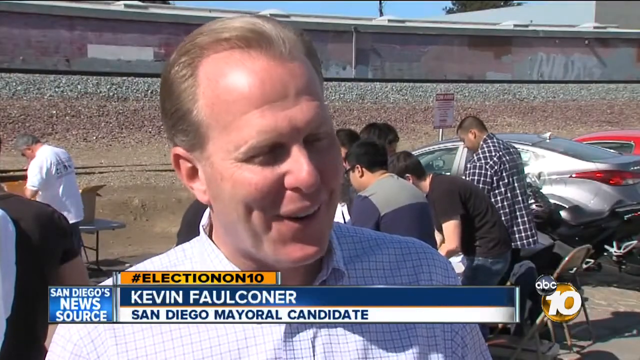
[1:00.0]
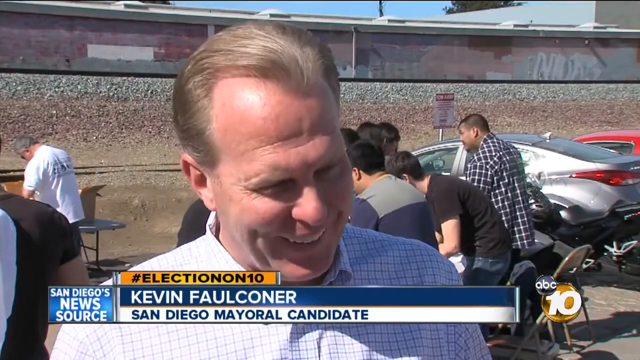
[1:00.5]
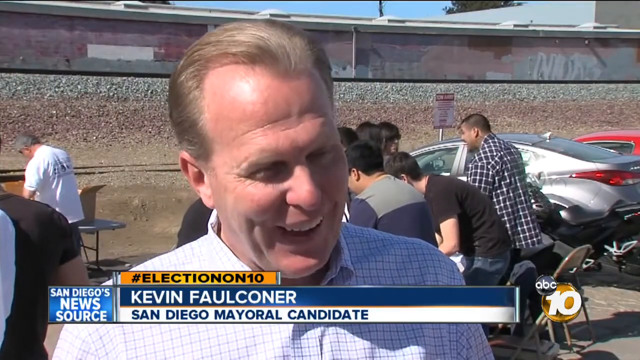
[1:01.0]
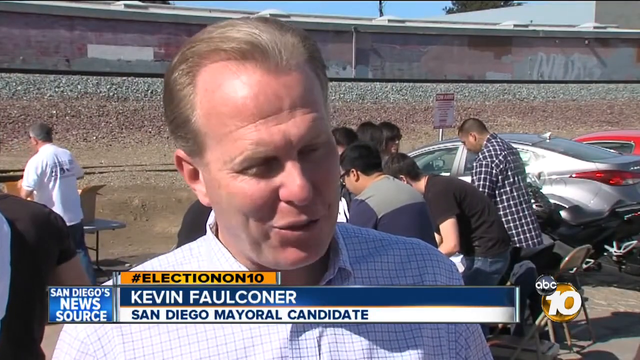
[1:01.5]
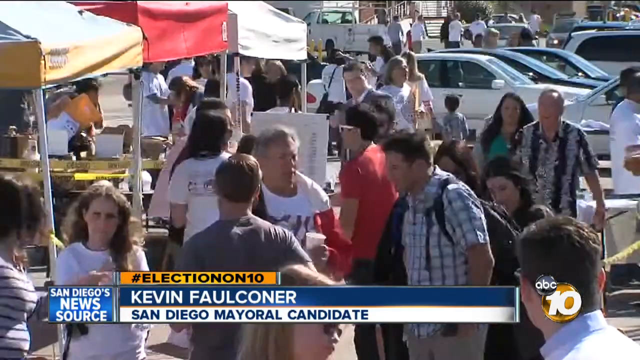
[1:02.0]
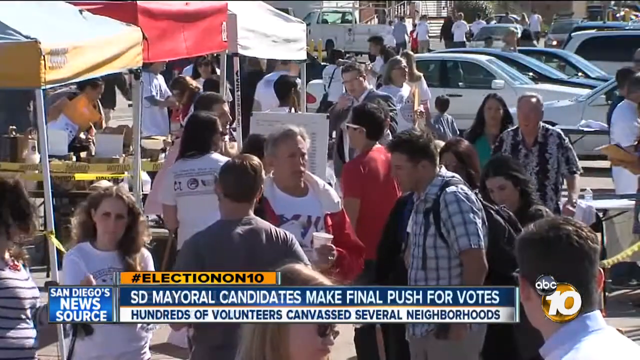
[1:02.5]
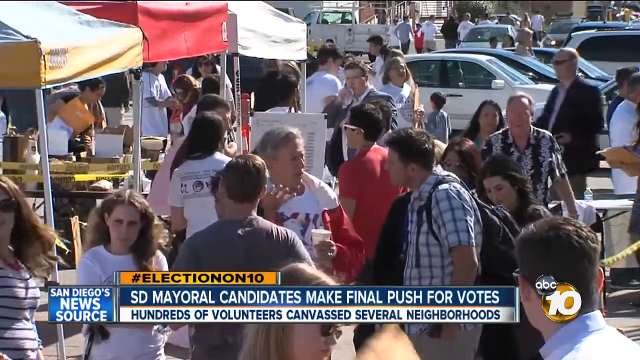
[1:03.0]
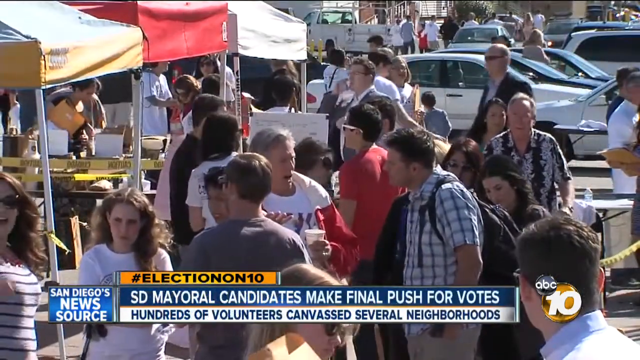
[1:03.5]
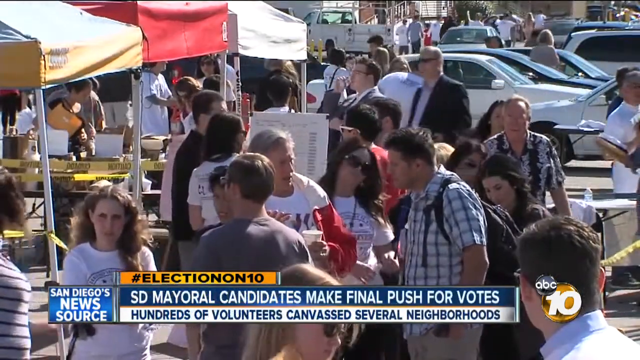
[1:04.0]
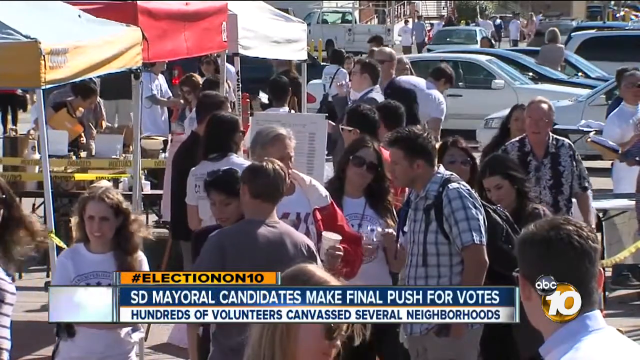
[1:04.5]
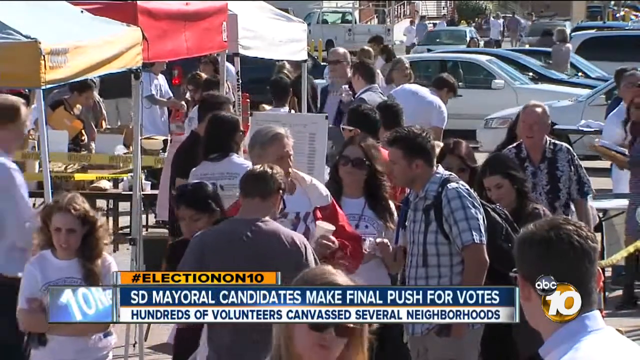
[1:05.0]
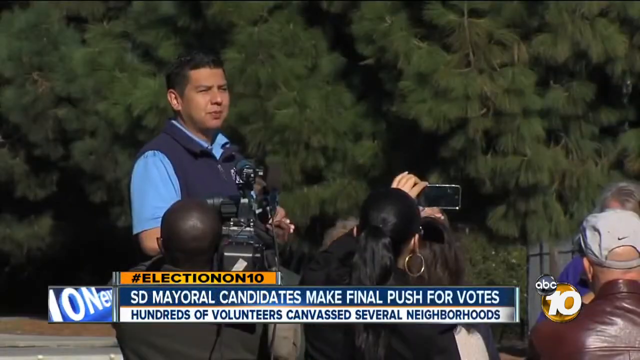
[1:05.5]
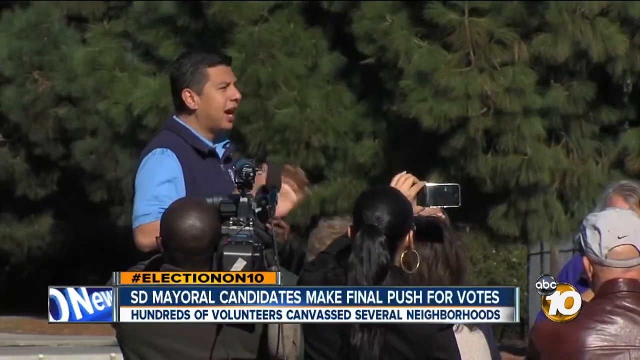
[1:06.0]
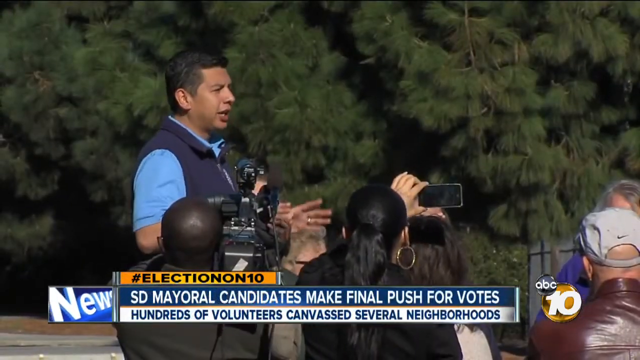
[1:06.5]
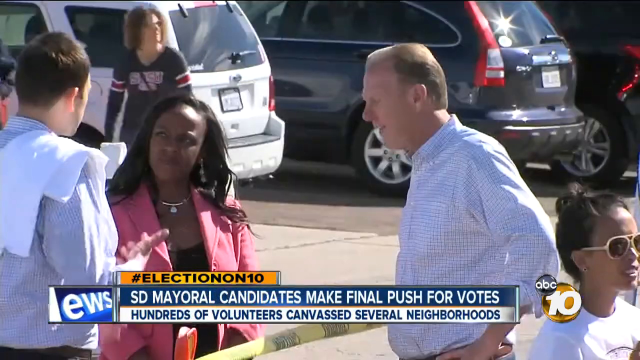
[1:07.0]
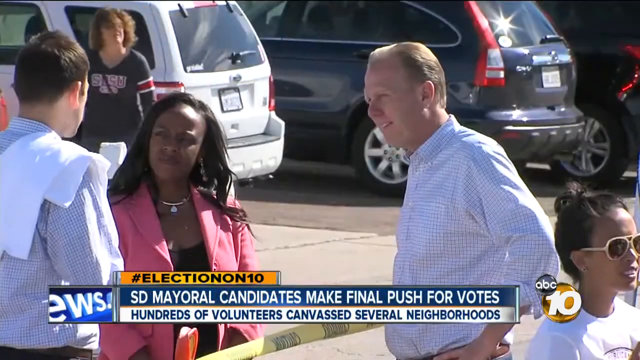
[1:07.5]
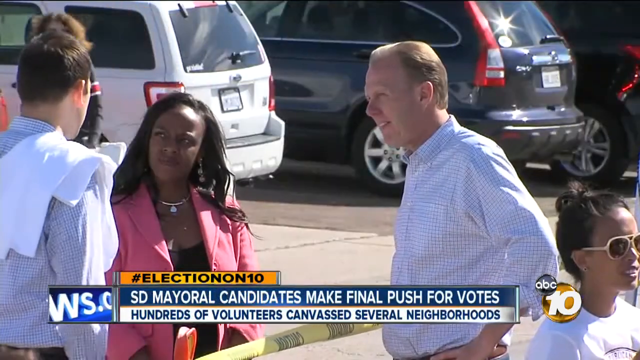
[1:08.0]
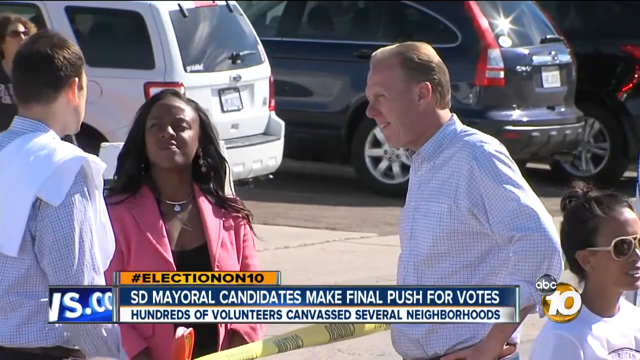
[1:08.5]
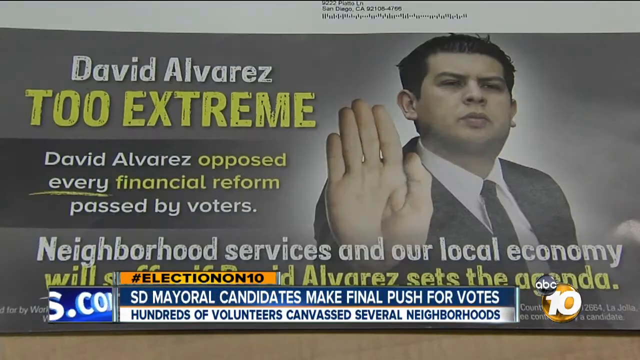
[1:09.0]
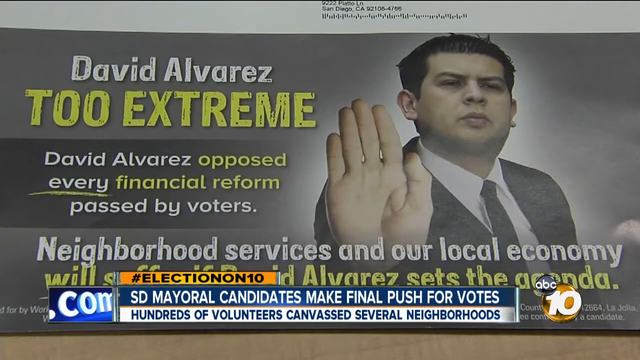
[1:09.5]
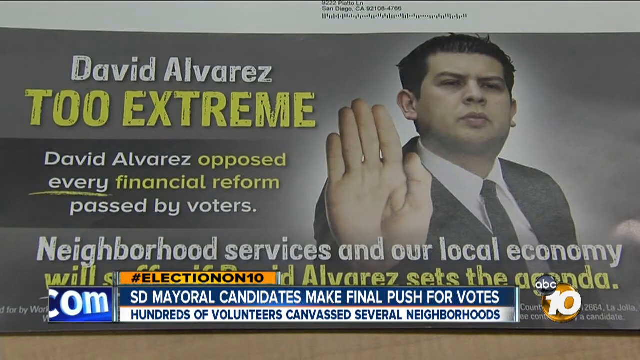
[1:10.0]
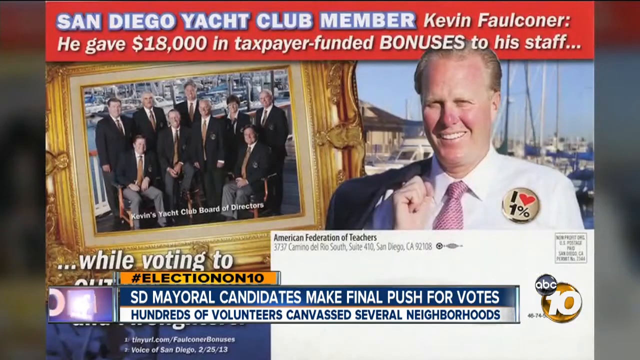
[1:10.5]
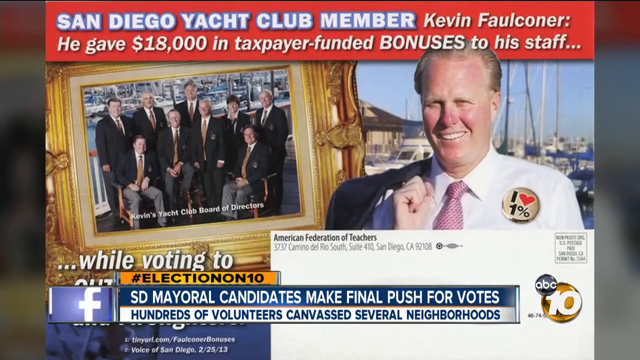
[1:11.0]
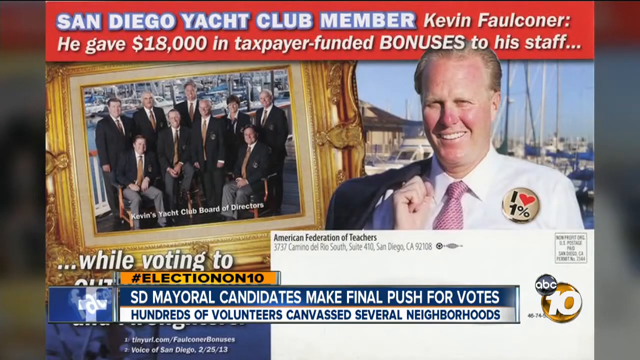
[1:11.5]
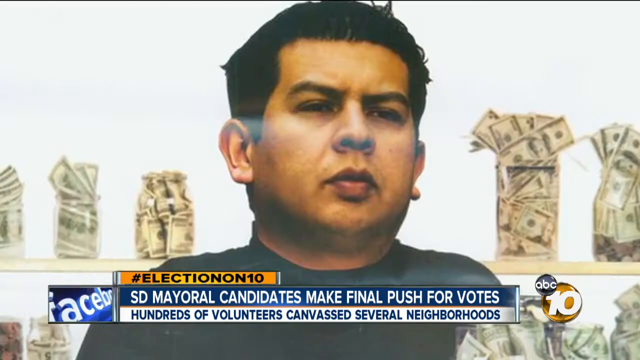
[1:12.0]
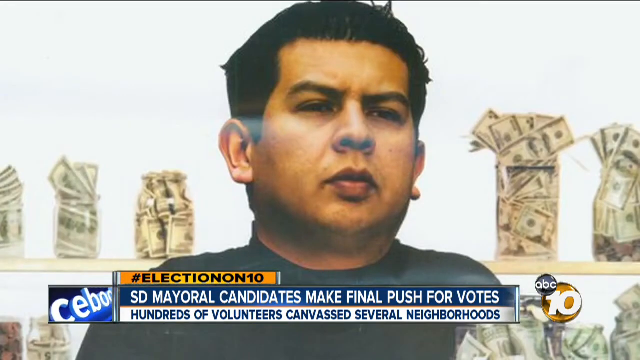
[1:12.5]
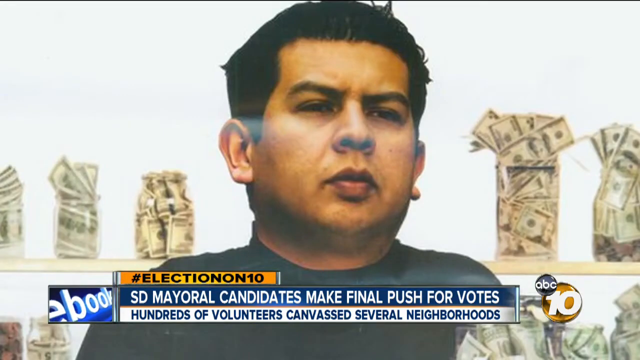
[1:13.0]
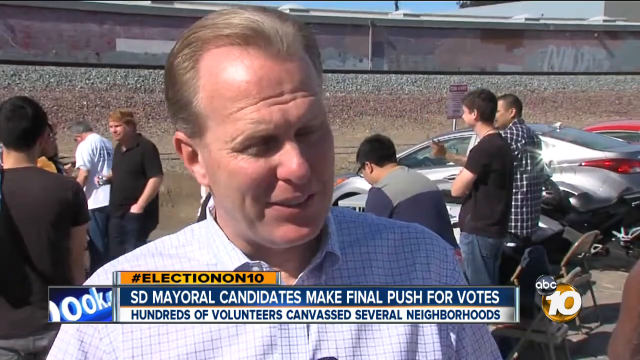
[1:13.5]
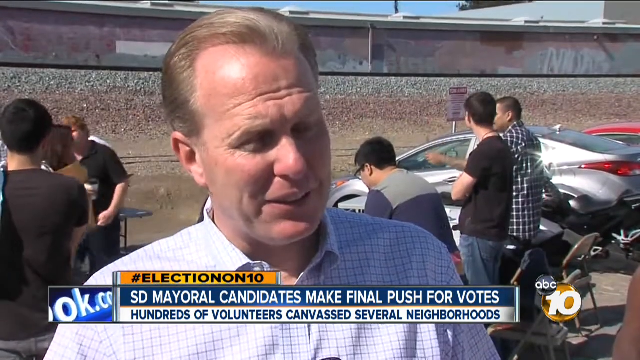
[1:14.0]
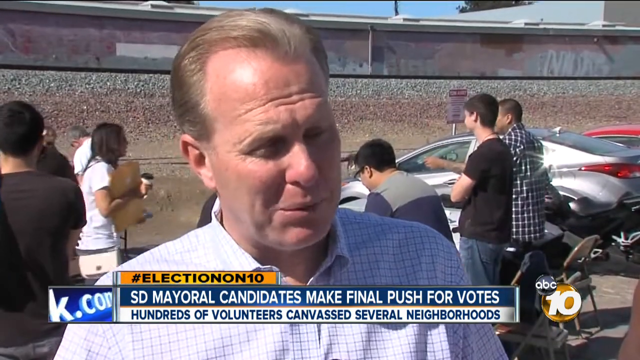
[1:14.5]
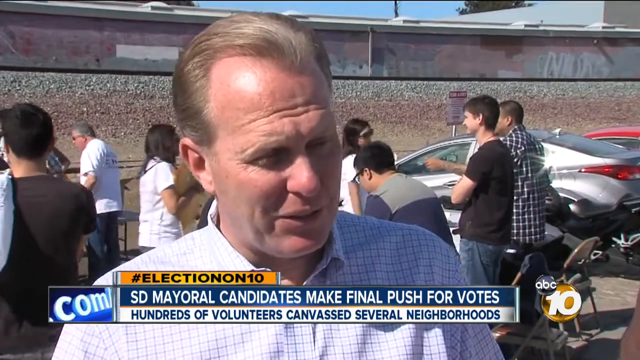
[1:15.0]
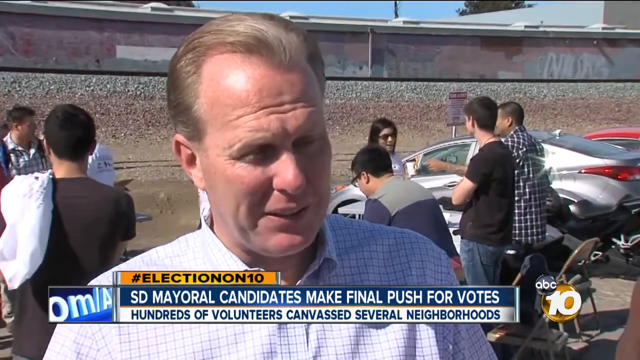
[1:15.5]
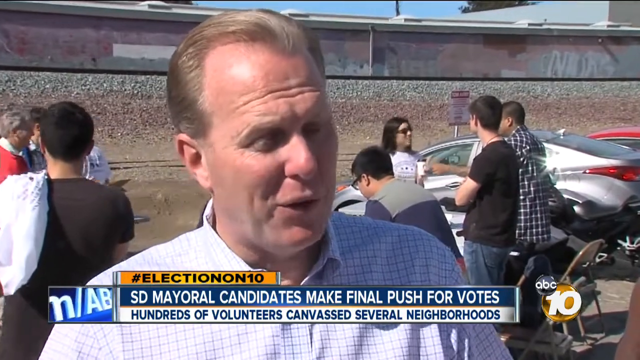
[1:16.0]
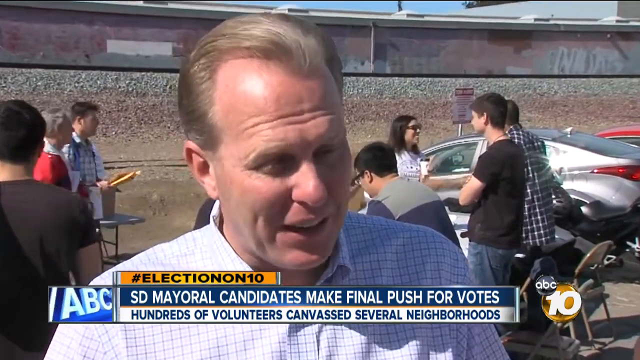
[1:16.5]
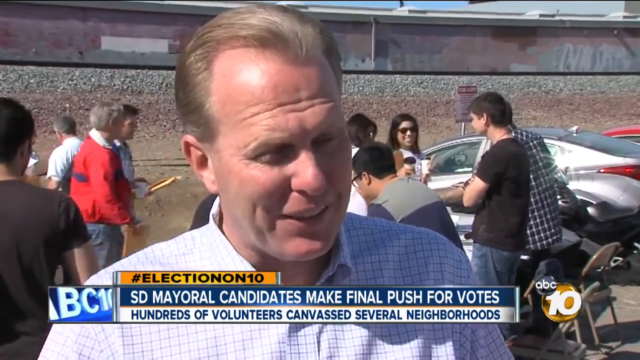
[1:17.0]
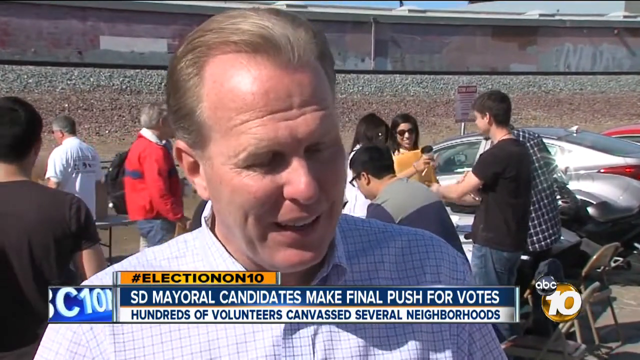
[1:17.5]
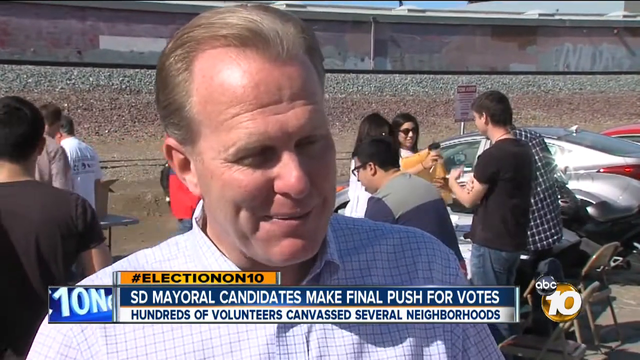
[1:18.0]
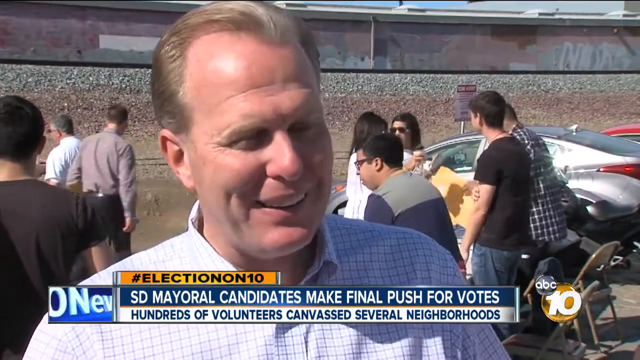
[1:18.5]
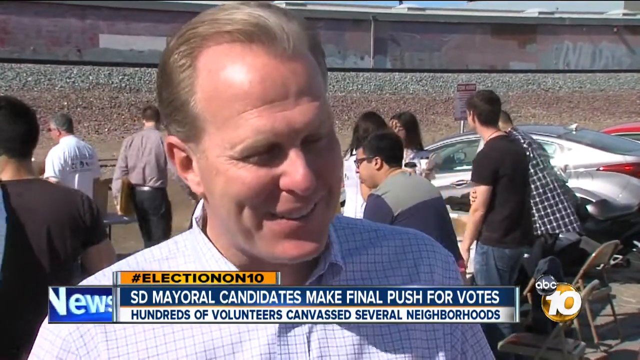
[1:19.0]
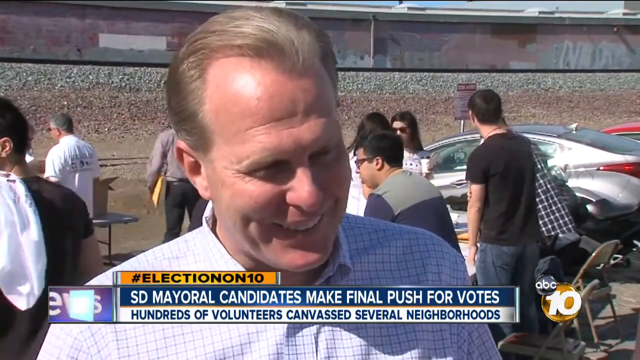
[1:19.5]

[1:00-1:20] Outdoors, a man with blond hair brushed back stands at the front, wearing a white shirt with a blue check. Several people are on either side of him, and in the top right section are two cars, a red one on the right and a silver one on the left. A different scene then shows three tents in the top left corner: a yellow tent, a red tent in the middle and a white tent on the right. Several cars are in the top right section, and many people are congregating in the center. A close-up view follows, with three cars in the background: a black car in the top right section, another black car next to it, and a white car next to that on the top left. The man in the check shirt now looks toward the left and speaks to another man standing on the left and a woman in a pink blazer standing between them.